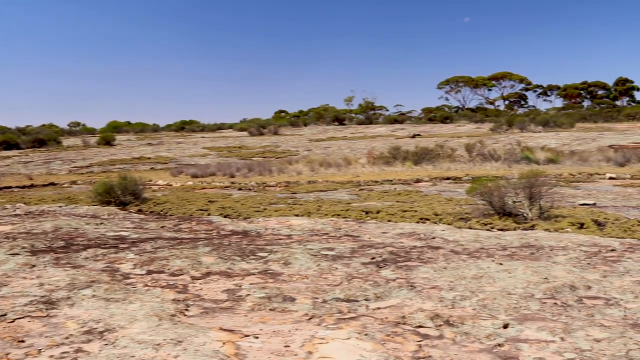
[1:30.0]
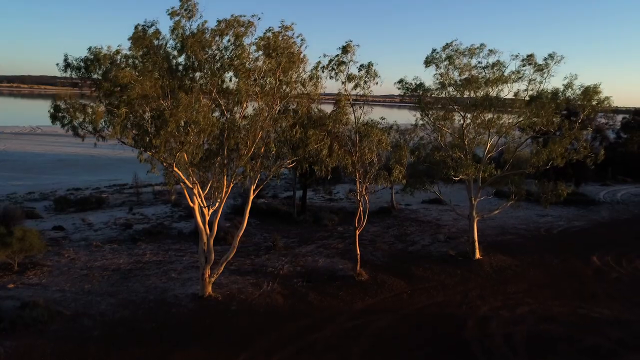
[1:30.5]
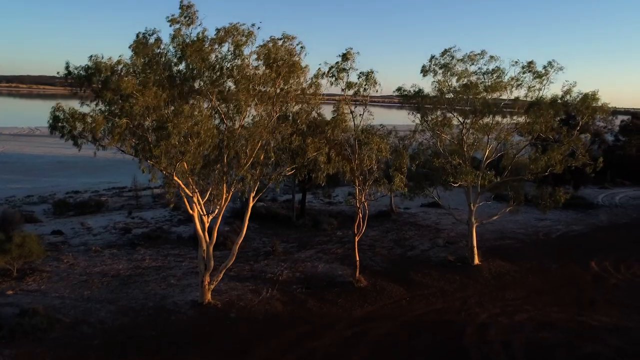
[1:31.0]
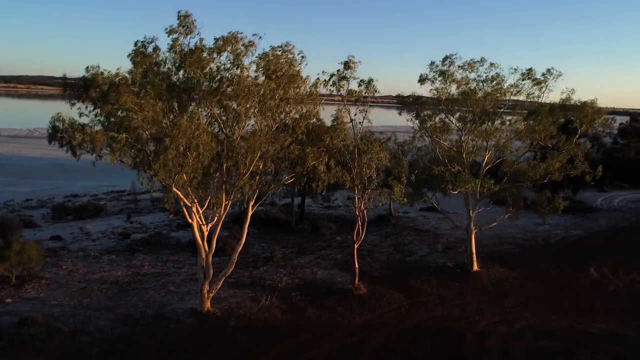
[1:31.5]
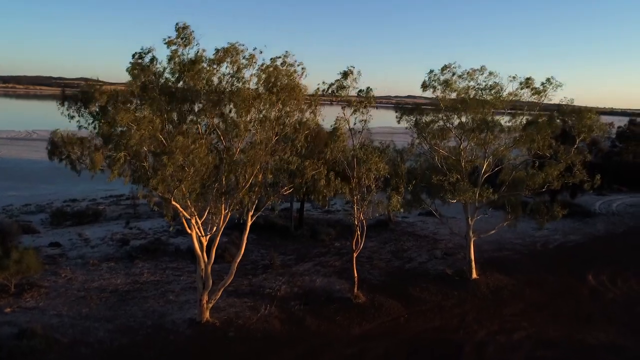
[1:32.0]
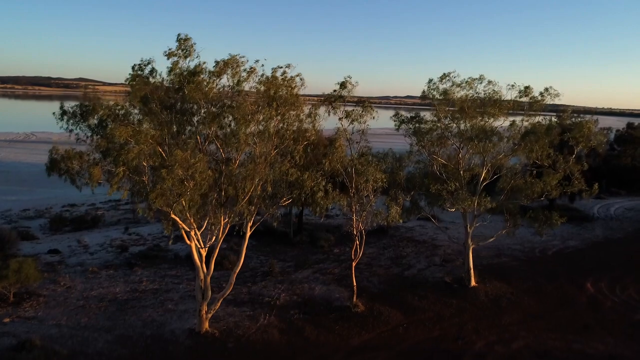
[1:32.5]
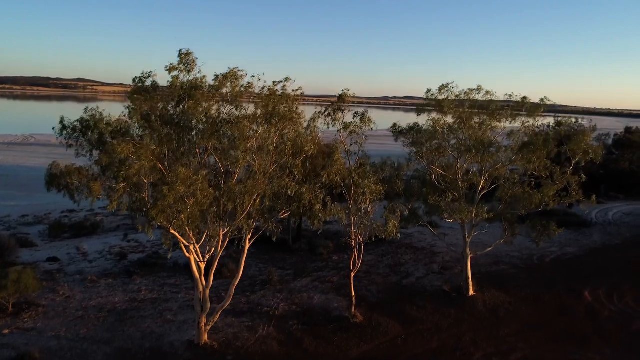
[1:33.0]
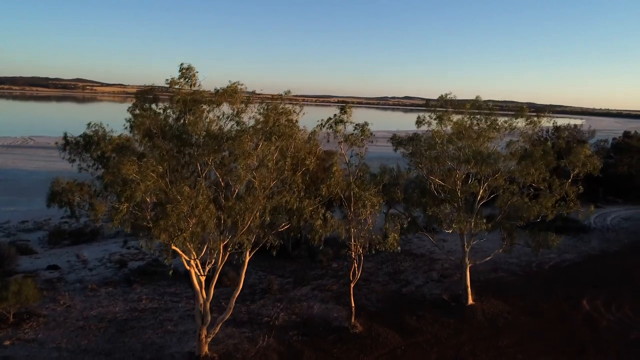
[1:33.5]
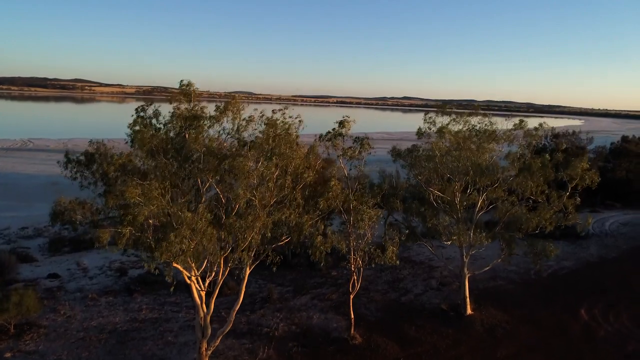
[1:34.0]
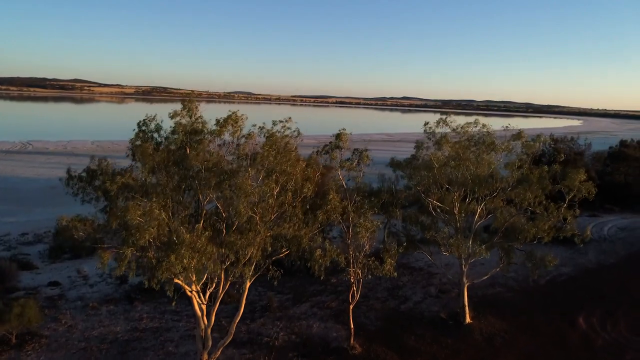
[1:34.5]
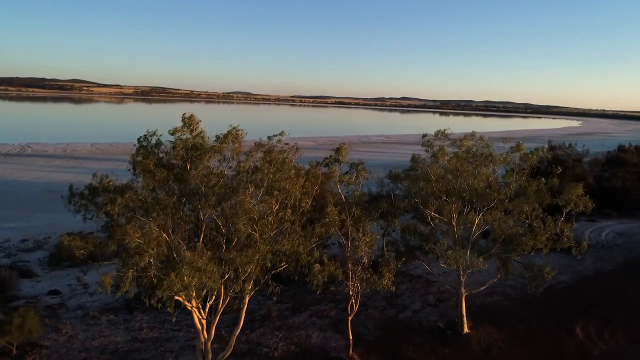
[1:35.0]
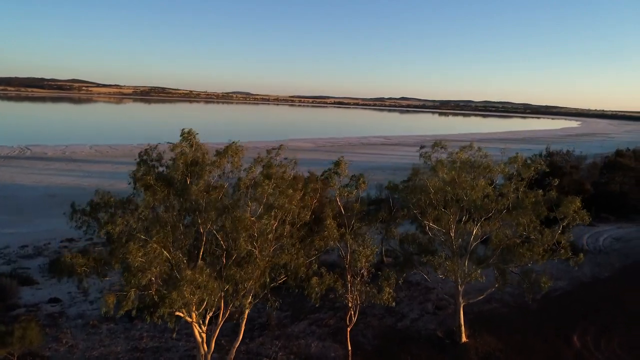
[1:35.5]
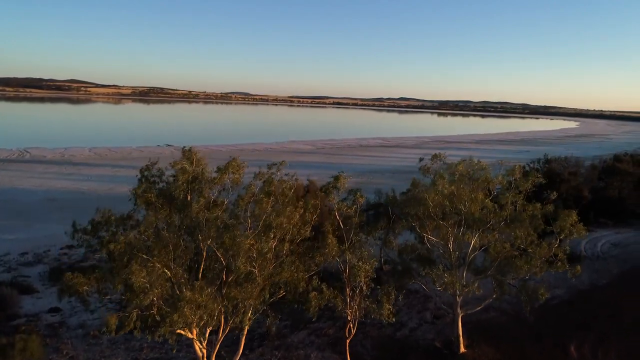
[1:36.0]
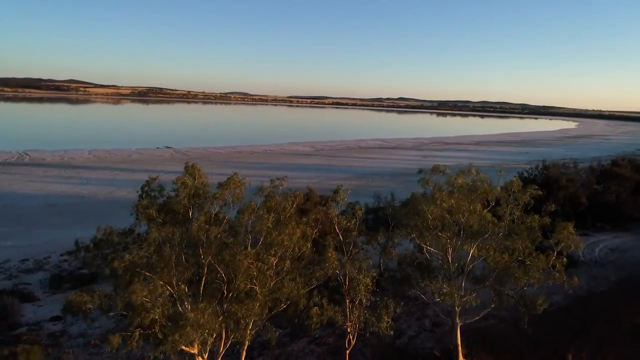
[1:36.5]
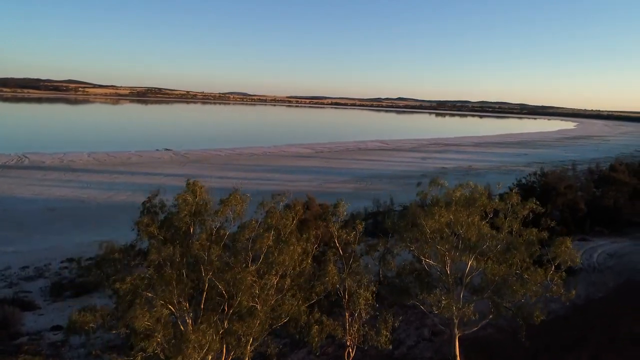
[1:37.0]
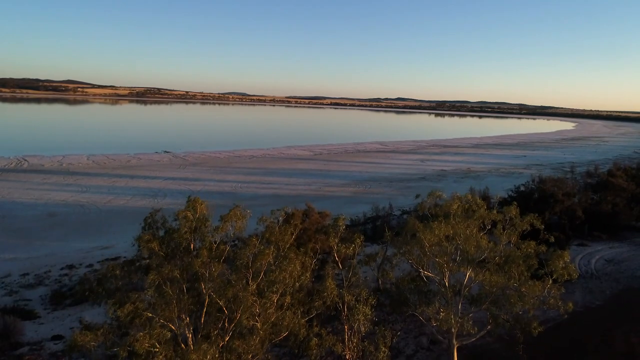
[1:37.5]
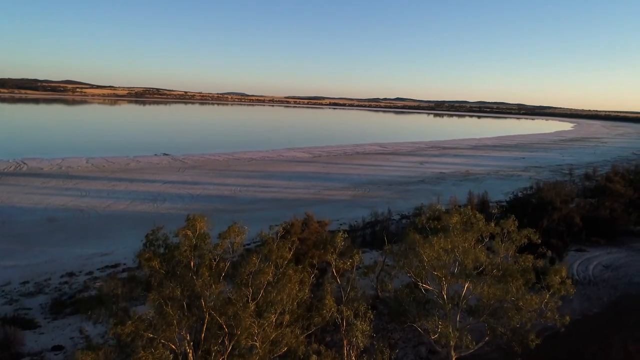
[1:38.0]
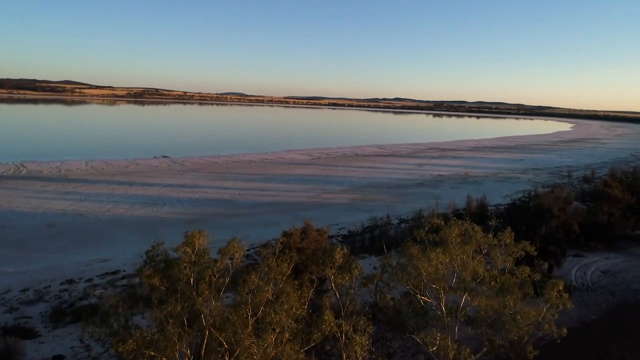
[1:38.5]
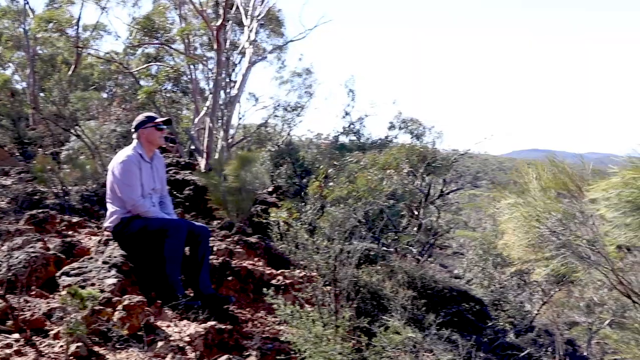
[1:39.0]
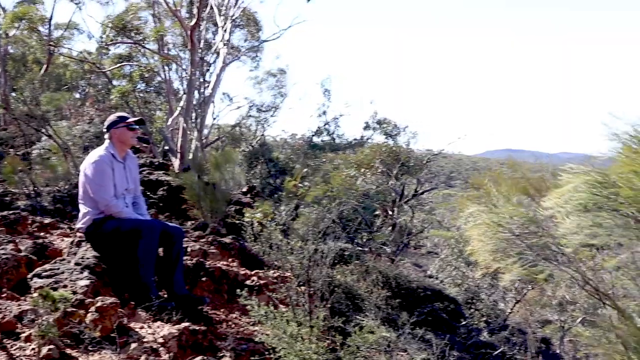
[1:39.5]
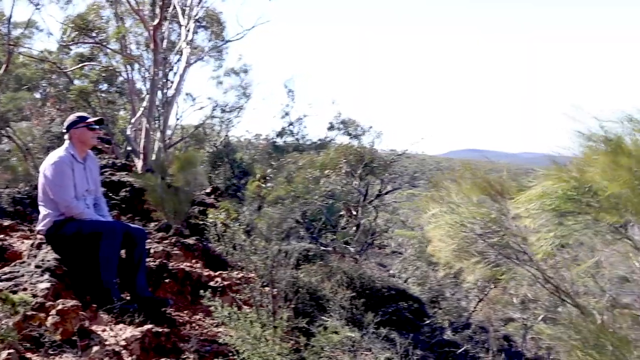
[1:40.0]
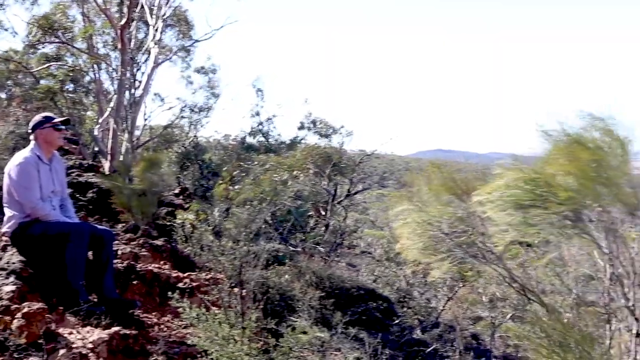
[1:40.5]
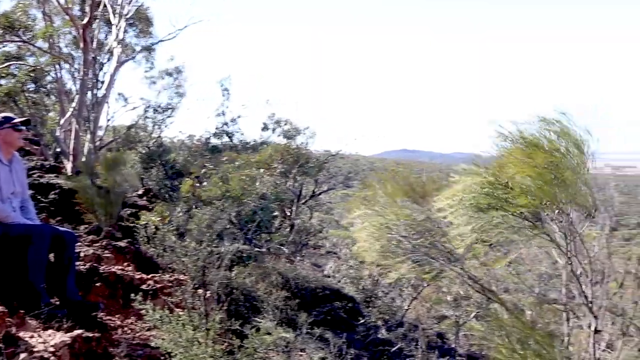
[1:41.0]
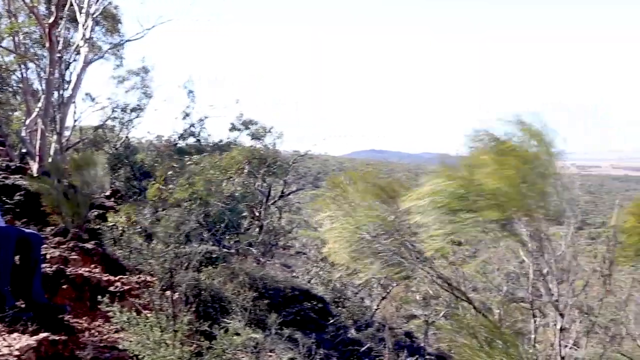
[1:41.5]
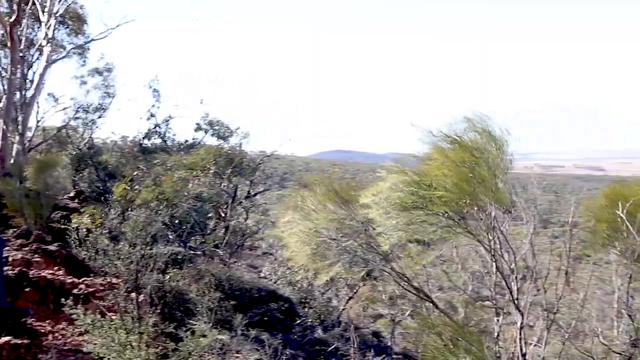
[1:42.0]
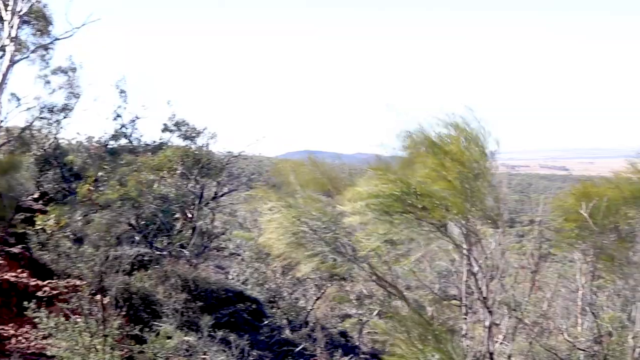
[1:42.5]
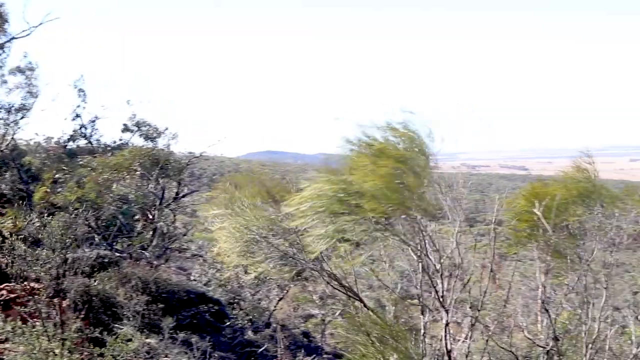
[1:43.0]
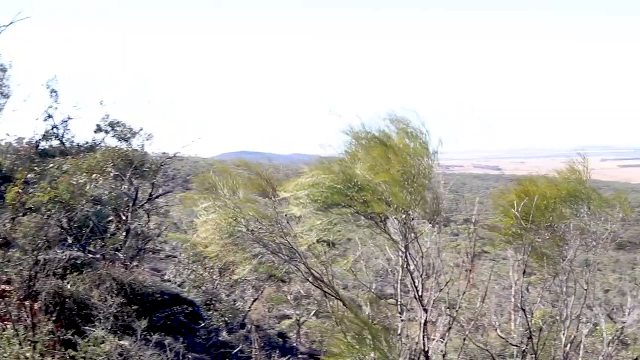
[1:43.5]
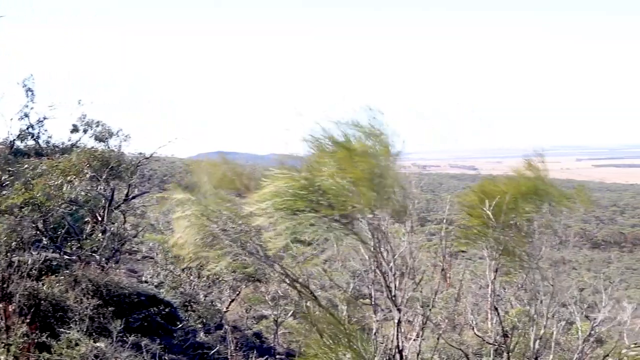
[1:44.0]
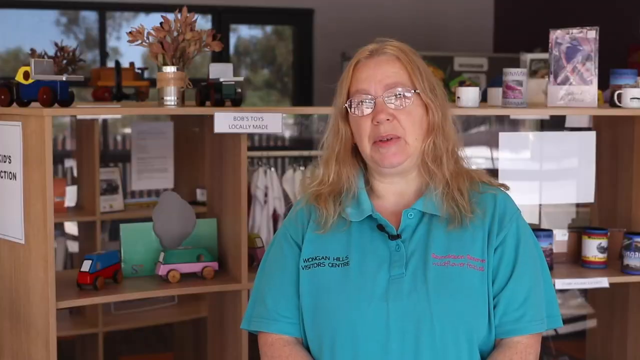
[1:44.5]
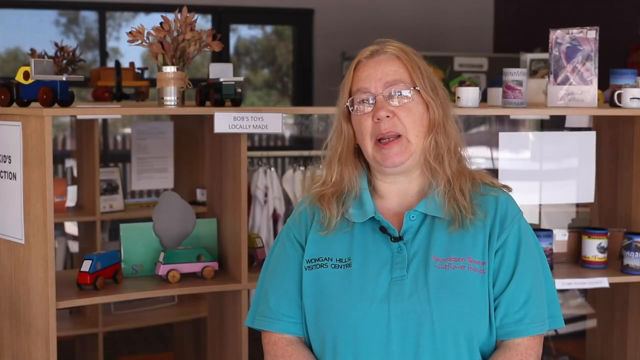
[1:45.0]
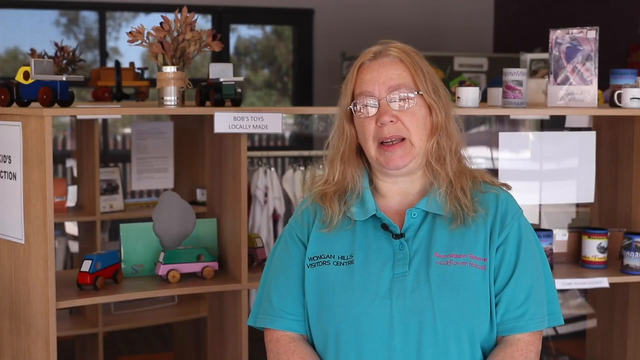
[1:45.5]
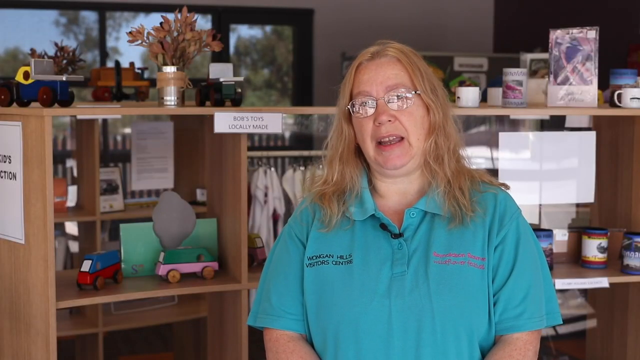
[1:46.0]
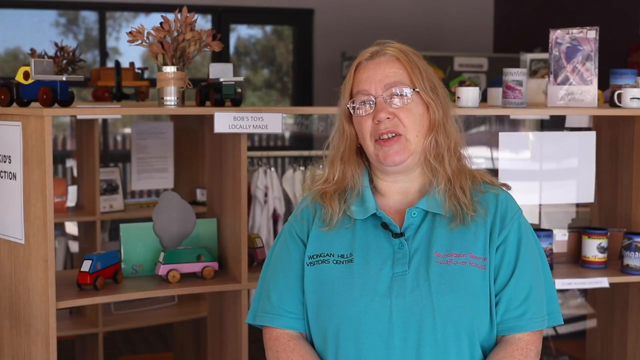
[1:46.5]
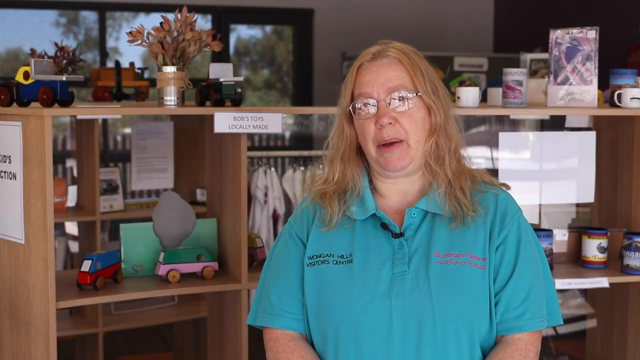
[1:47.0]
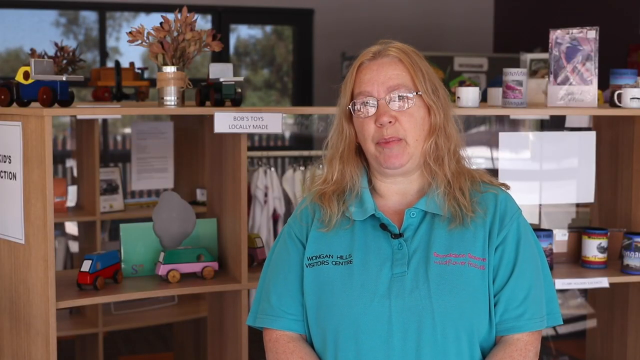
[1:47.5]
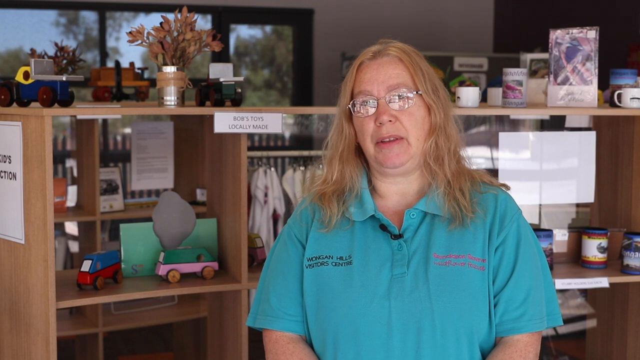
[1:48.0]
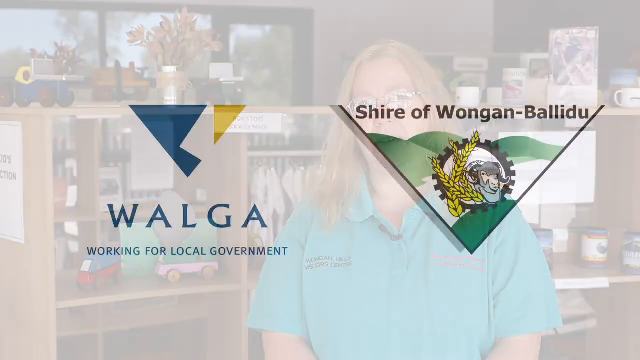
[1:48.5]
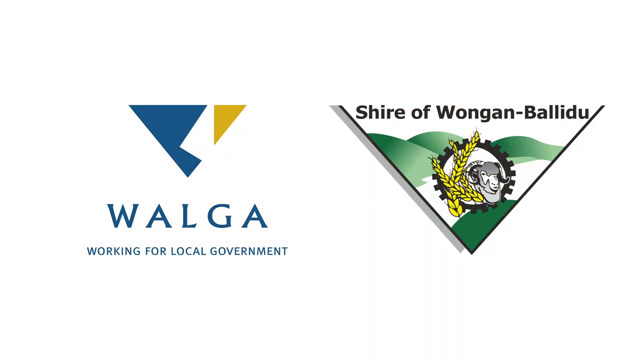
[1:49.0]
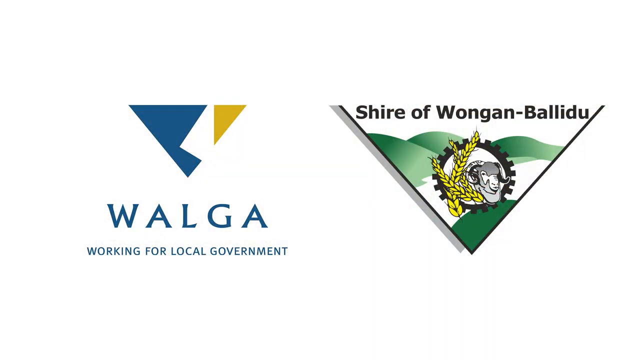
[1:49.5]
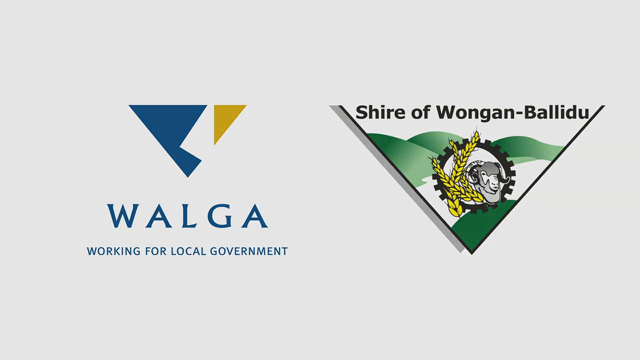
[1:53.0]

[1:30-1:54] The camera looks at trees and then pans up, looking over the trees at a lake in the distance. Next, a man sits on a hillside looking down the hill and off into the distance as the camera pans to the right; wind blows the trees and bushes around him. The video cuts to the woman who works in the park store, talking inside the store with shelves in the background. She speaks for a second or so before a title card appears. On the left is a blue, yellow and white icon, kind of a pyramid shape, over the words "WALGA, working for local government". On the right is another icon that says "Shire of Wongan Ballidu", showing a goat head and some wheat inside a gear, on green mountains inside a triangle.